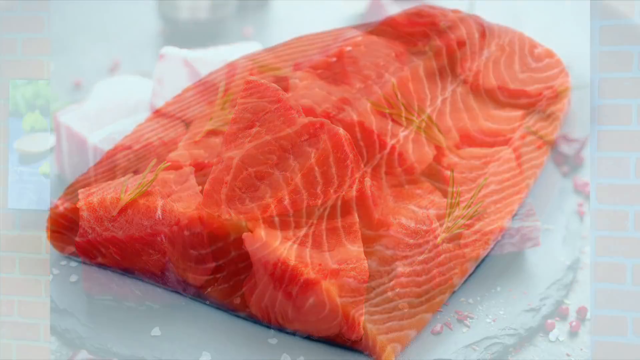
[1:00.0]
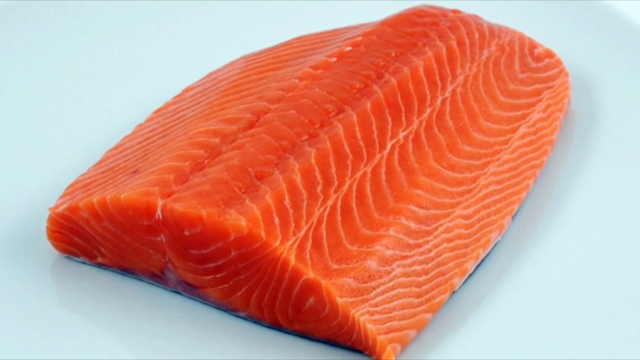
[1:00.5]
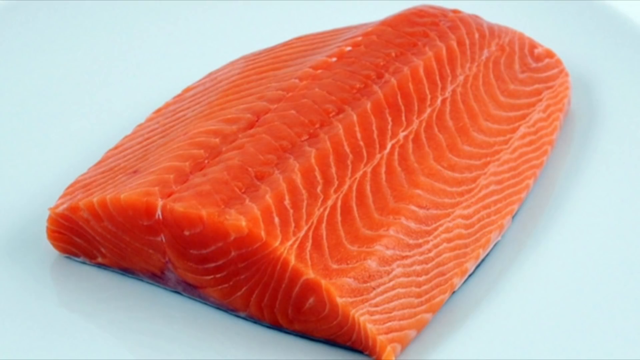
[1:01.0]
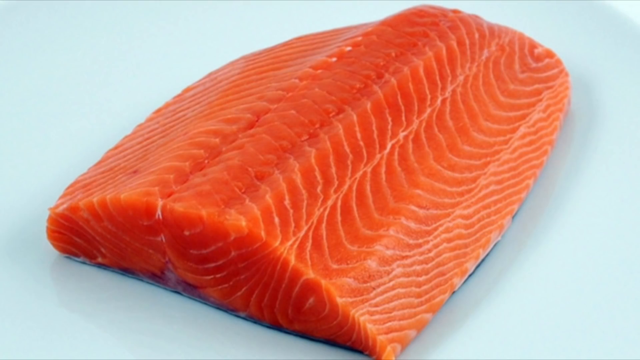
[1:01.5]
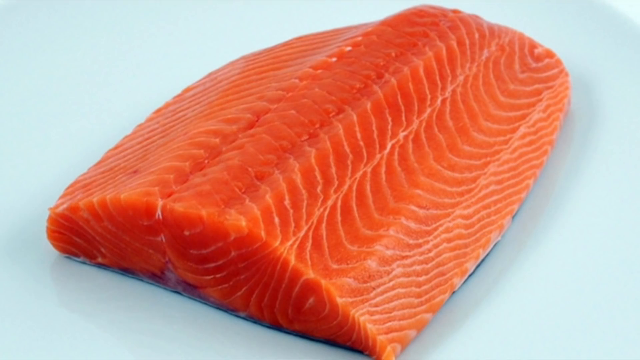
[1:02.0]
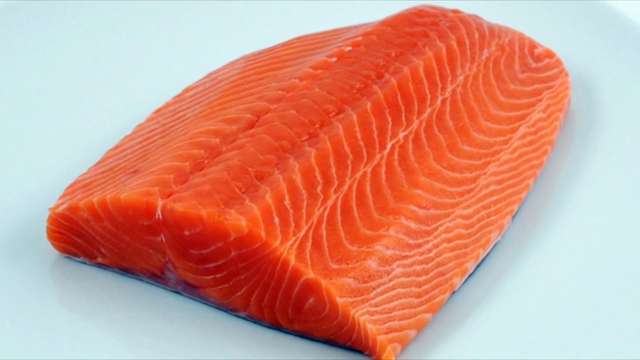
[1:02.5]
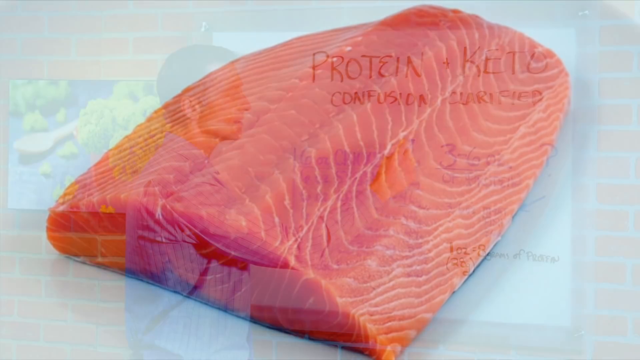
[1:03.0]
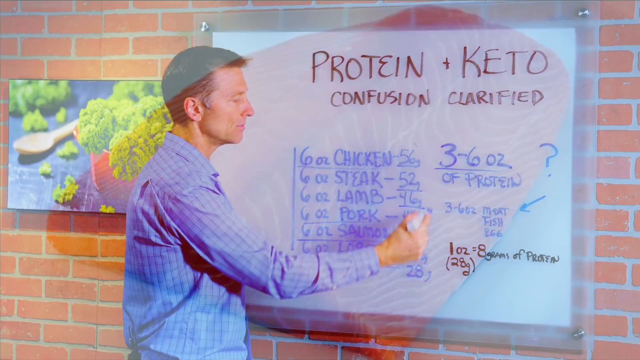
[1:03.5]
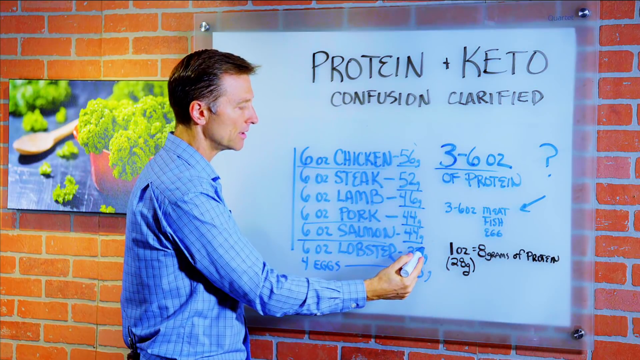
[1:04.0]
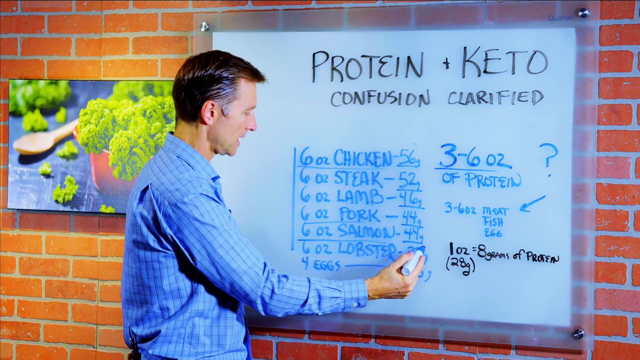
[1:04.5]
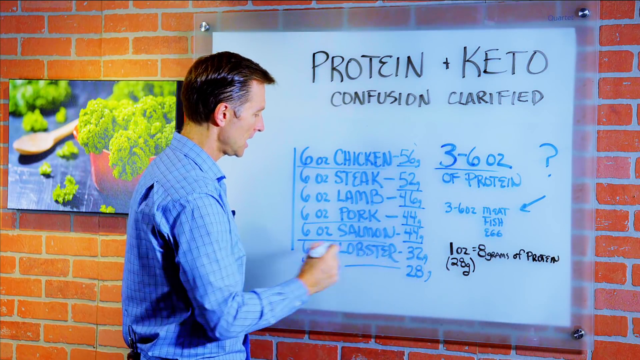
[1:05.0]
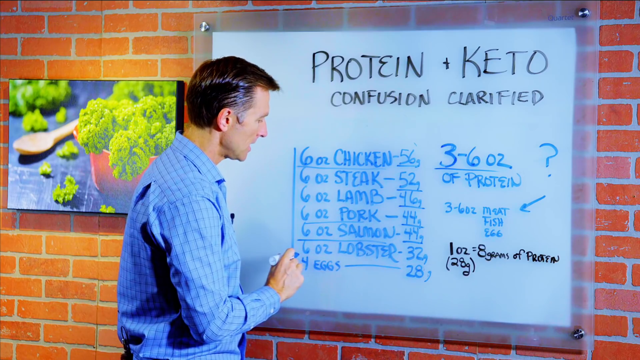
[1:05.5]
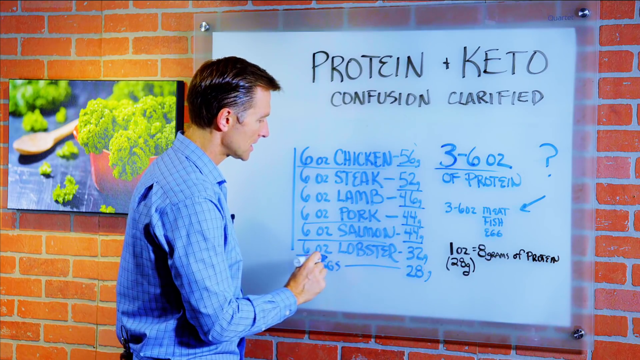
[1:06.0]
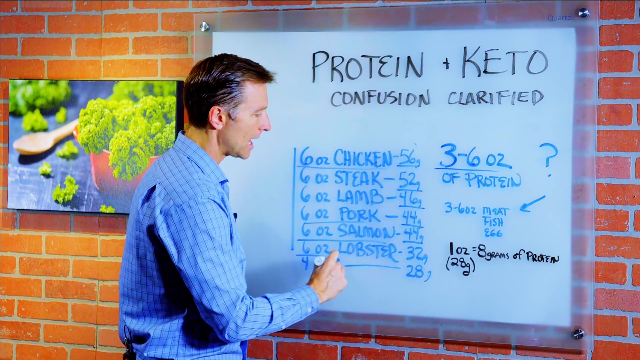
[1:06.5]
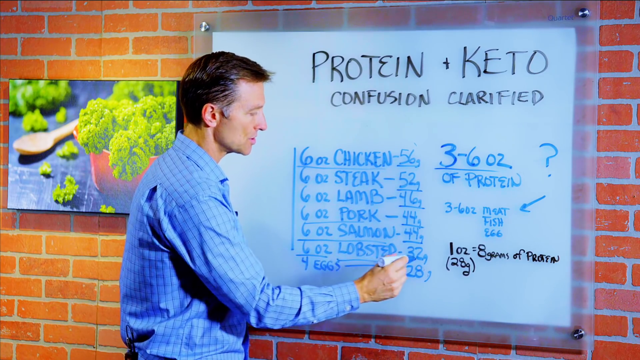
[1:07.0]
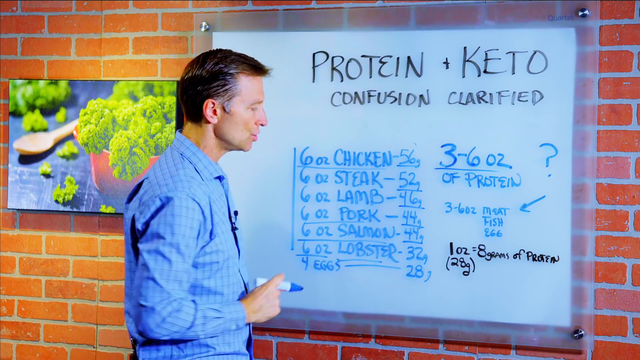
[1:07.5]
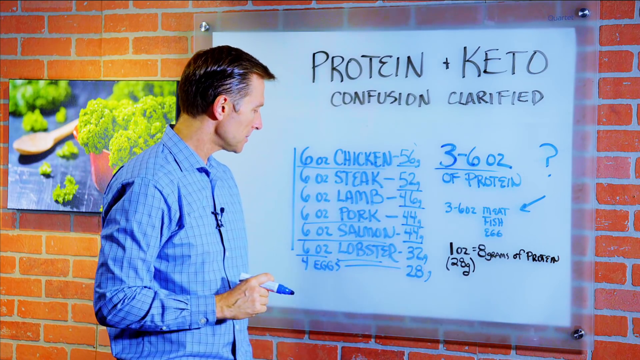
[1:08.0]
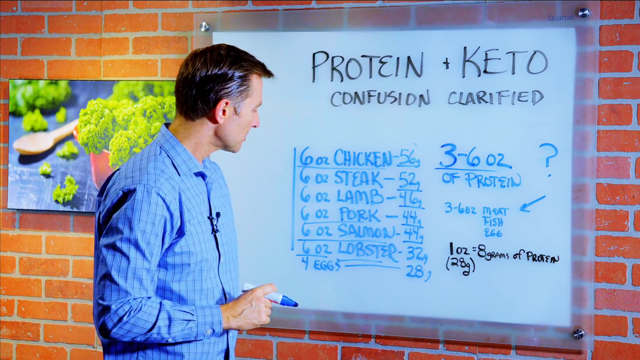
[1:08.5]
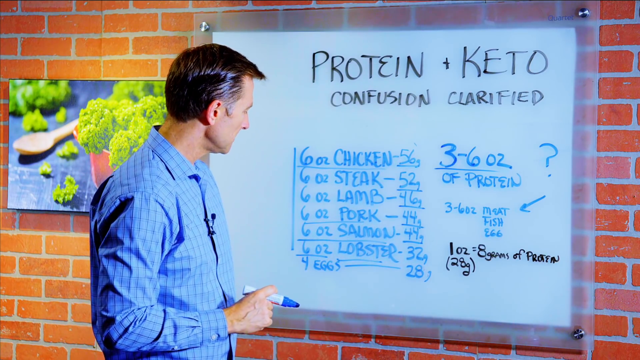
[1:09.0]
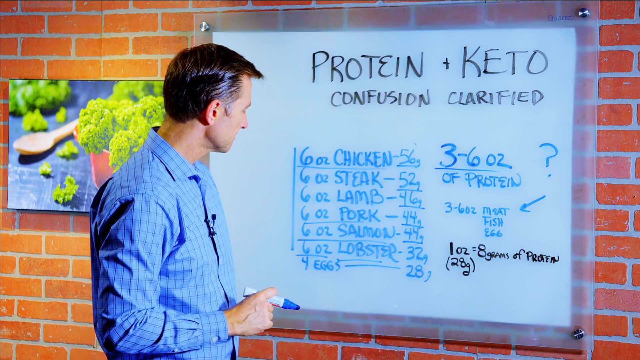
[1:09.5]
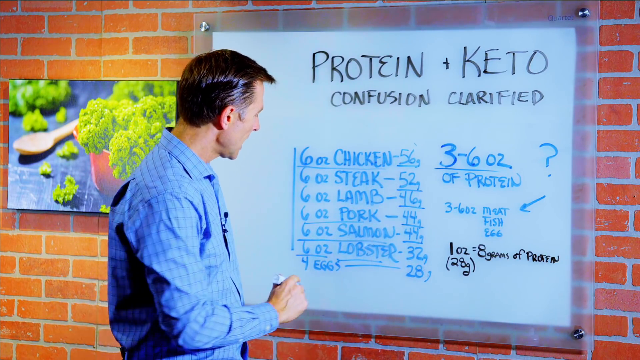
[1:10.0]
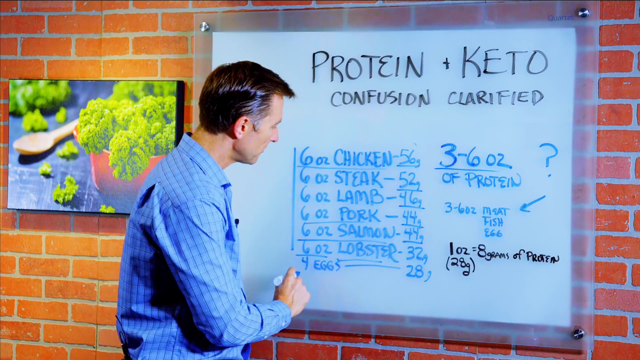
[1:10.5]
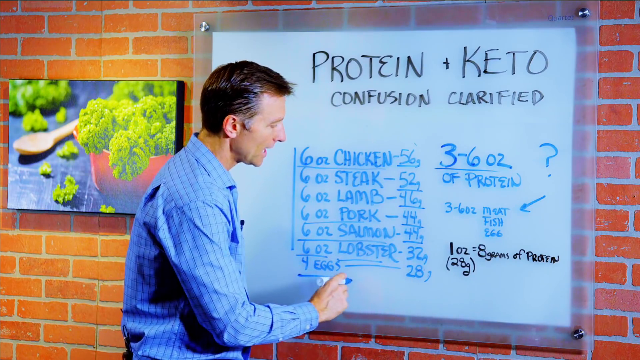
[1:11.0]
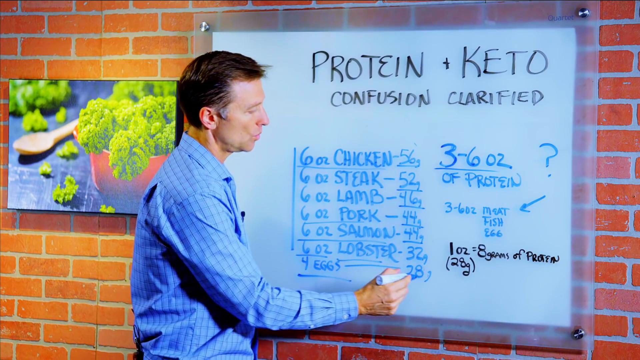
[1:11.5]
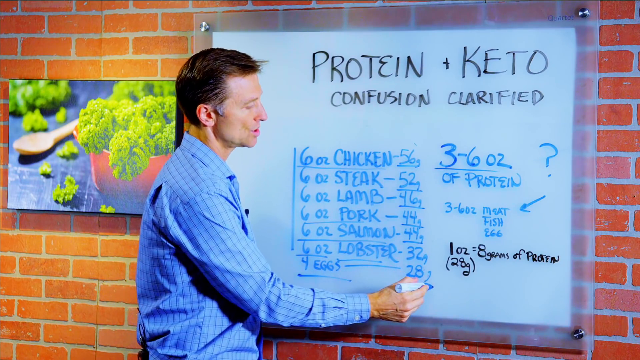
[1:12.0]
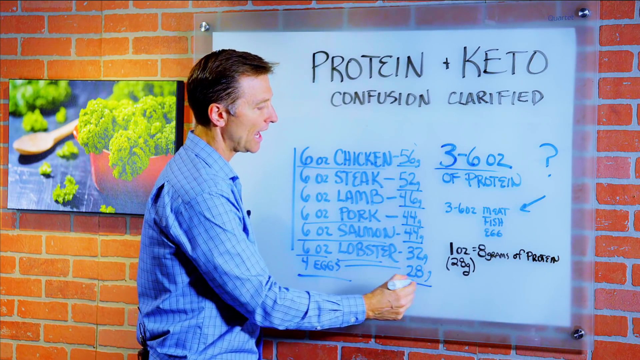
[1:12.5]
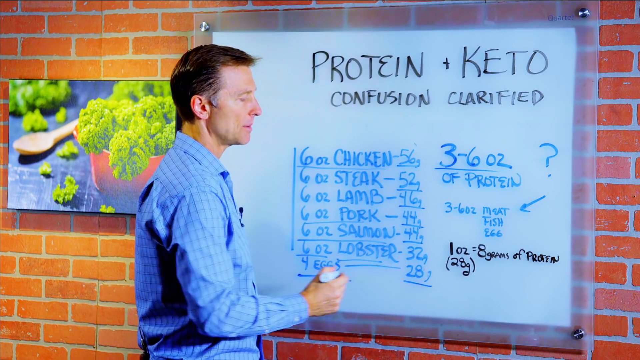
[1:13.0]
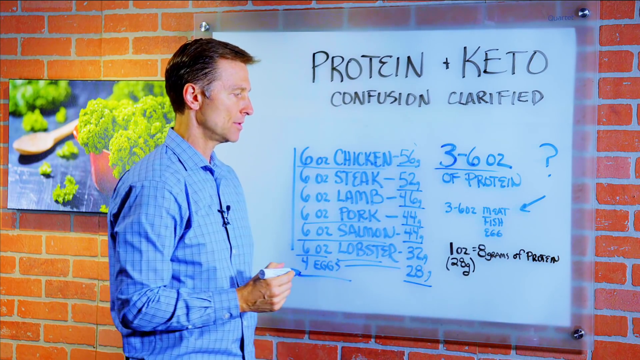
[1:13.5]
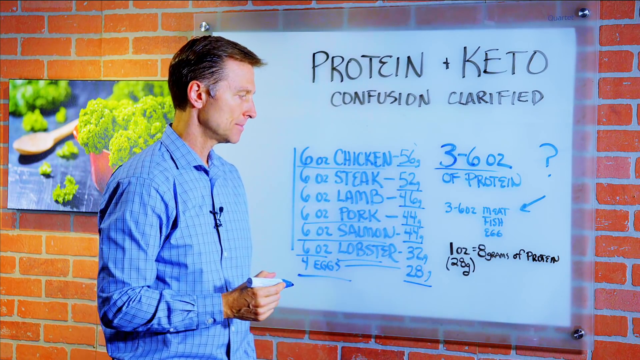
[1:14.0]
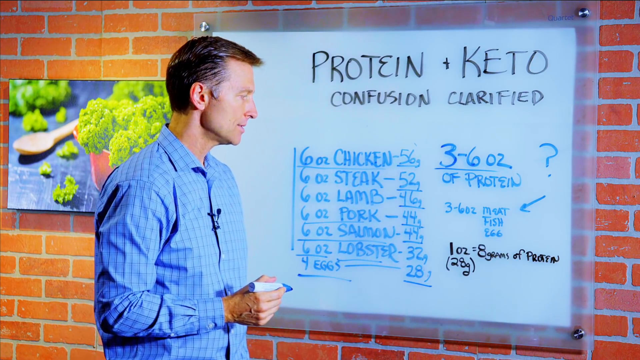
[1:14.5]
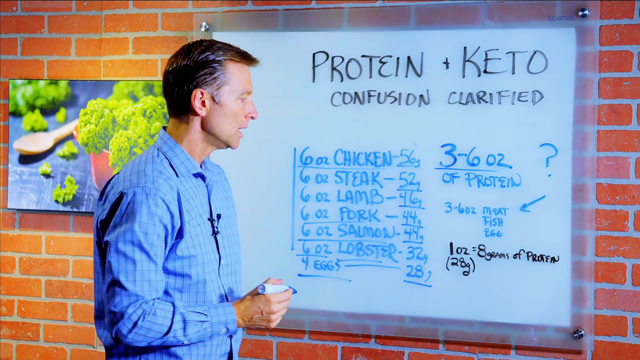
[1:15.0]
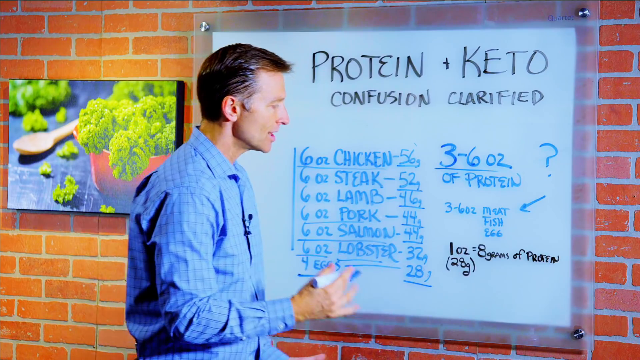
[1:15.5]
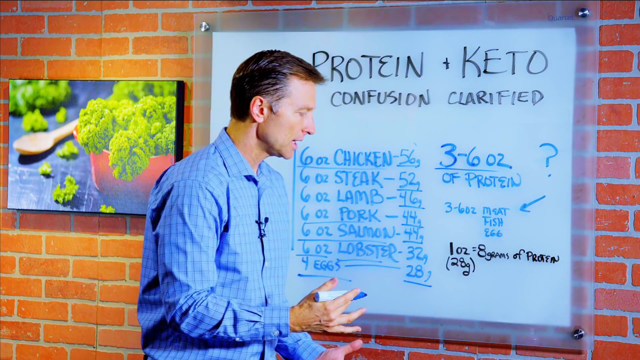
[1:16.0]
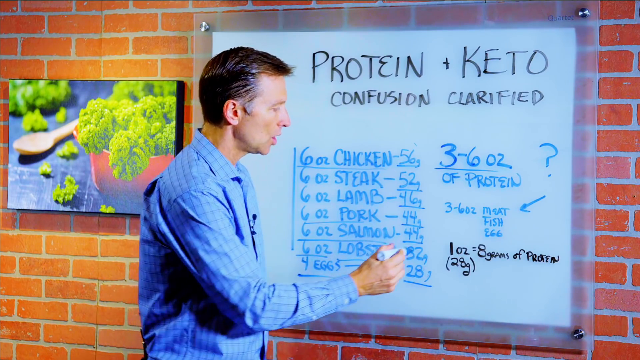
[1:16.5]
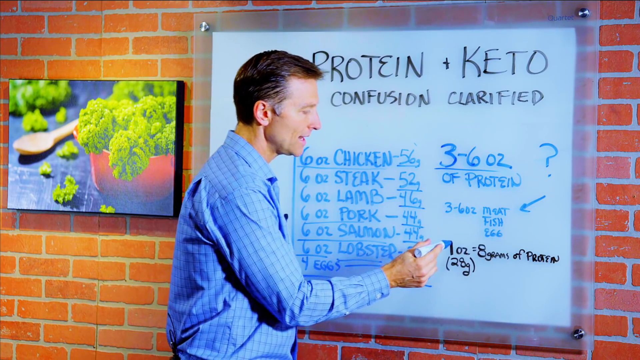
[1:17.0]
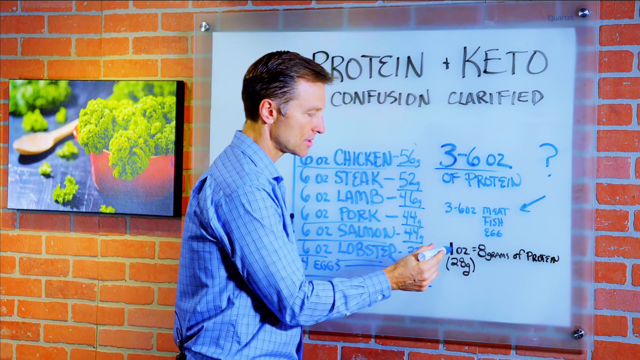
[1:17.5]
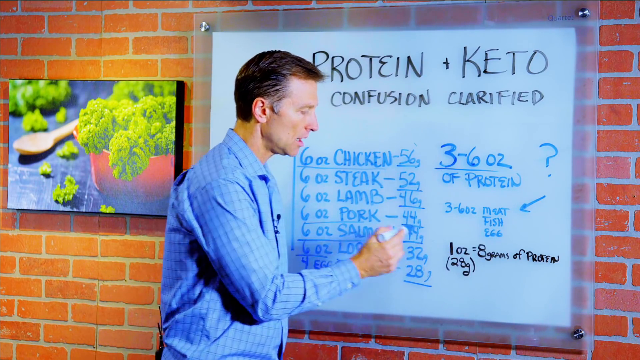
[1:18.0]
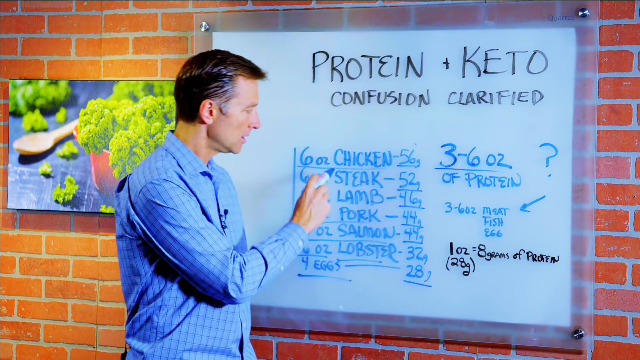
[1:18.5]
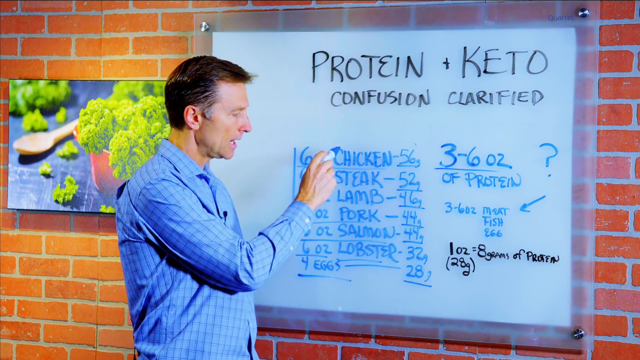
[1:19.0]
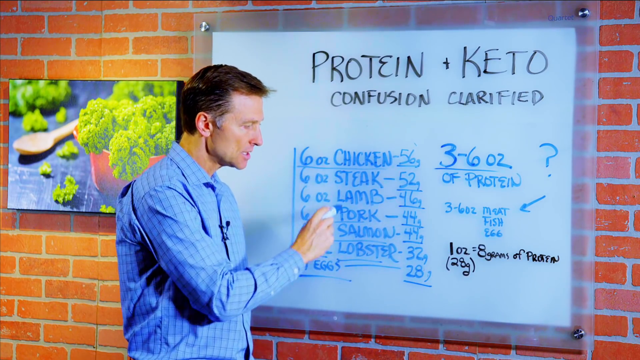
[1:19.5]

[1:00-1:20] The large piece of salmon is on a white diner-style plate. The video zooms out on the salmon, the last stock photo, before cutting back to the man at the chalkboard. He uses the blue marker to section off and draw on portions of the text he explained earlier, while still gesturing with his hands toward the camera. He turns fully toward the board to write and underline things as he speaks, then pivots, uses both hands to speak and points at the black portion of text before turning back toward the camera, still talking with his hands. He underlines the individual proteins as well as "28 grams" in black text, then uses both hands to give an example of a portion size. The camera pulls and turns back as he continues underlining each point.